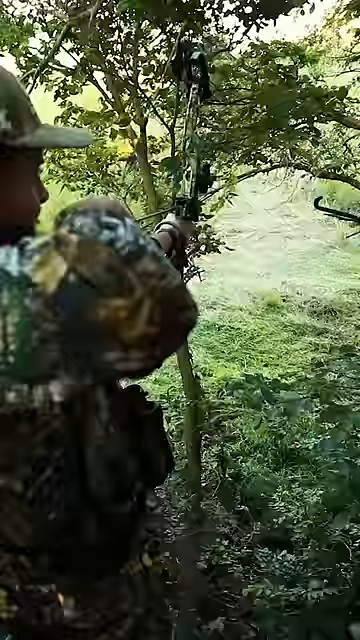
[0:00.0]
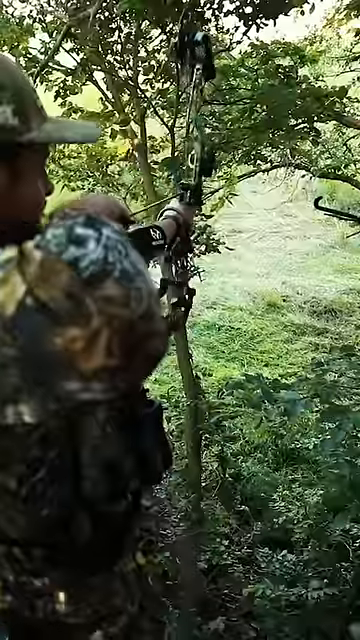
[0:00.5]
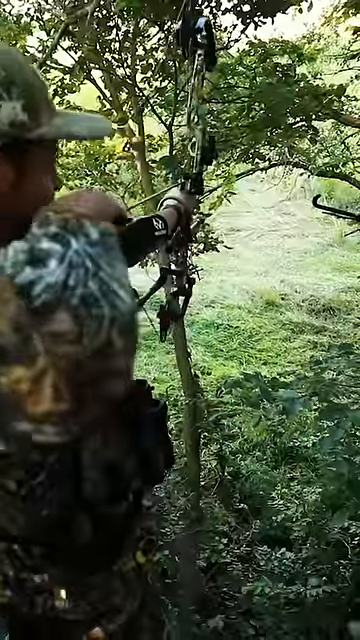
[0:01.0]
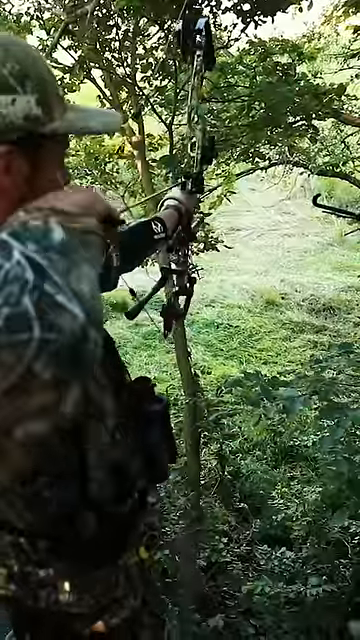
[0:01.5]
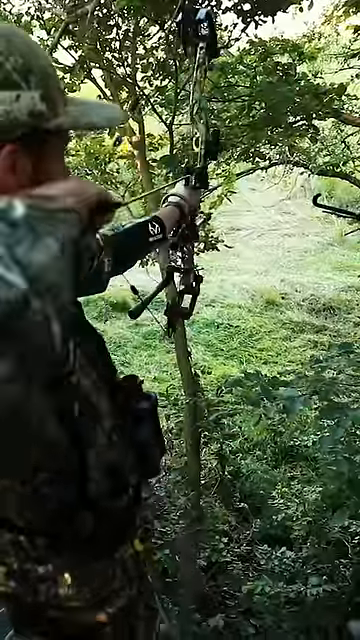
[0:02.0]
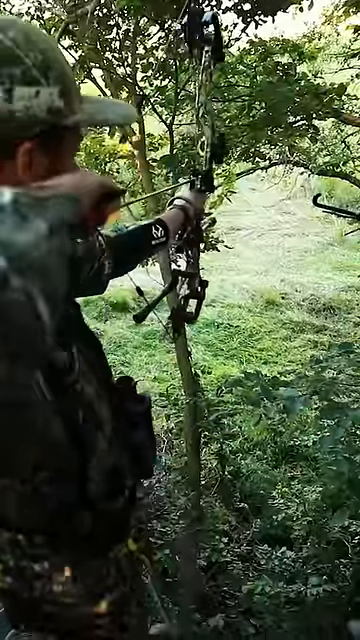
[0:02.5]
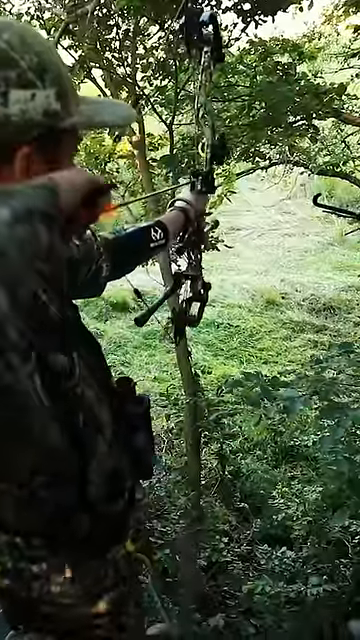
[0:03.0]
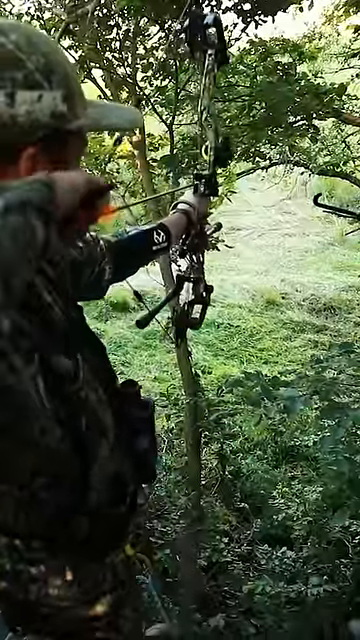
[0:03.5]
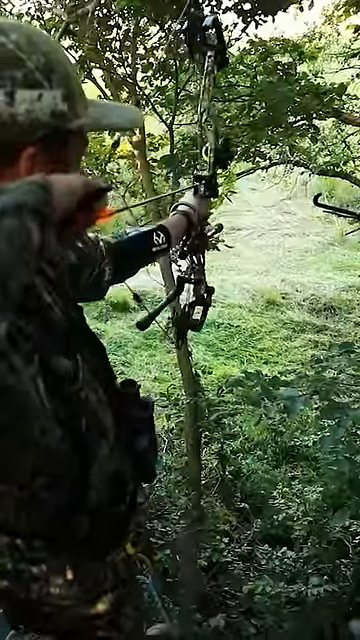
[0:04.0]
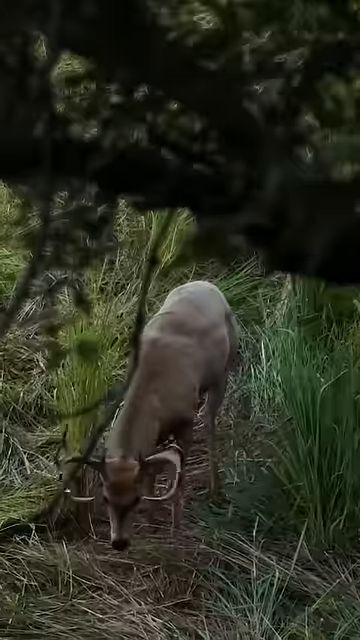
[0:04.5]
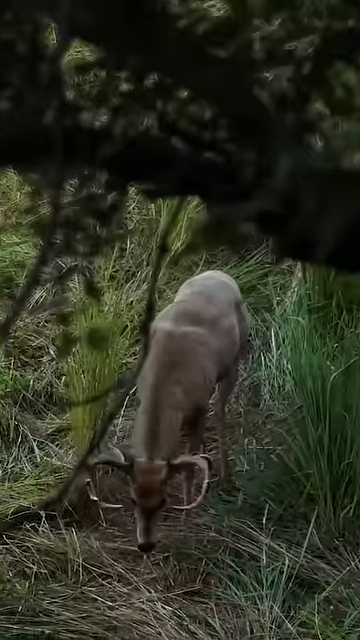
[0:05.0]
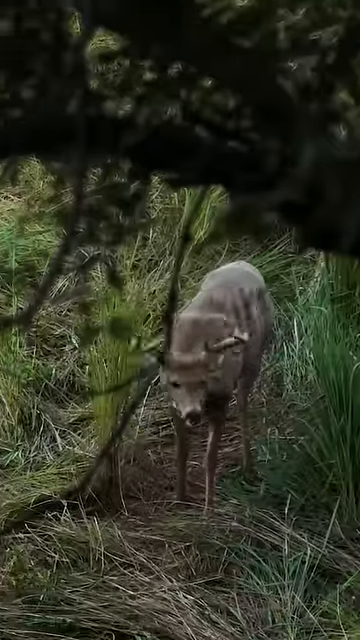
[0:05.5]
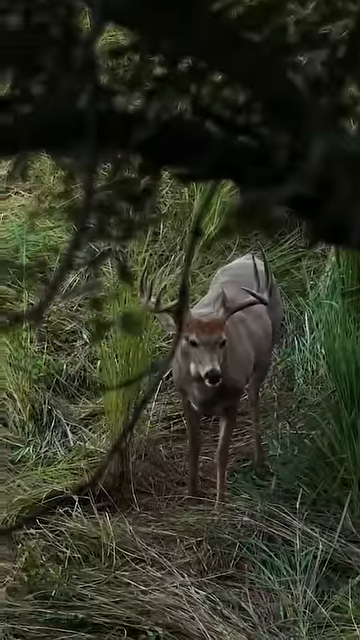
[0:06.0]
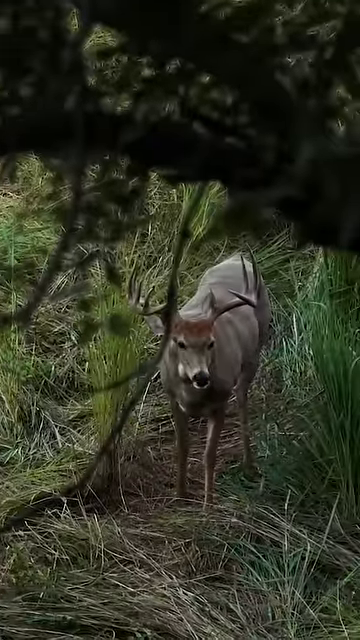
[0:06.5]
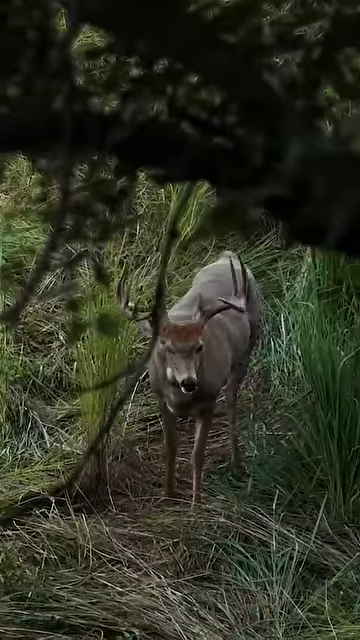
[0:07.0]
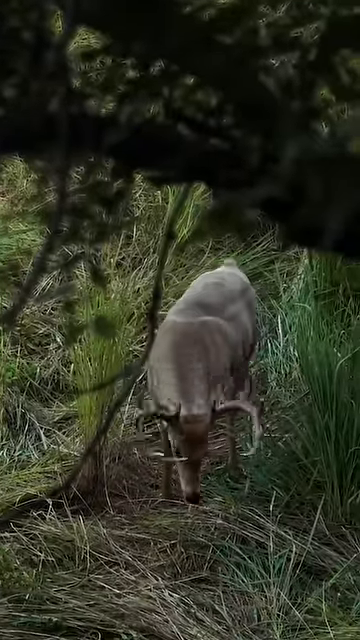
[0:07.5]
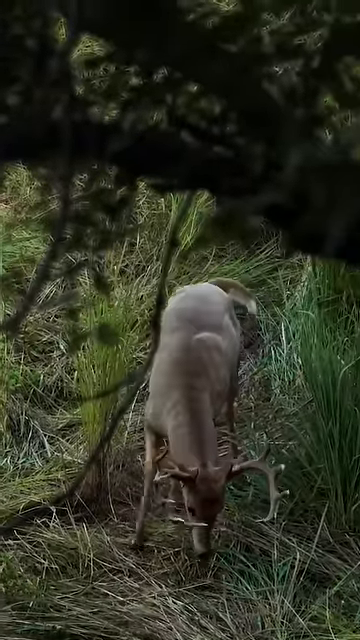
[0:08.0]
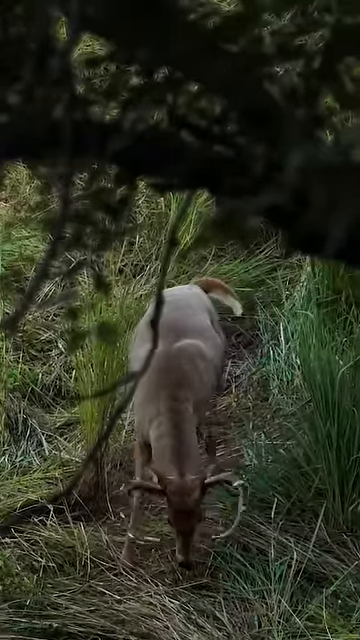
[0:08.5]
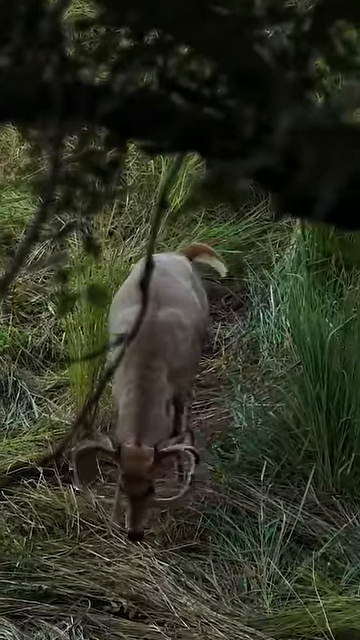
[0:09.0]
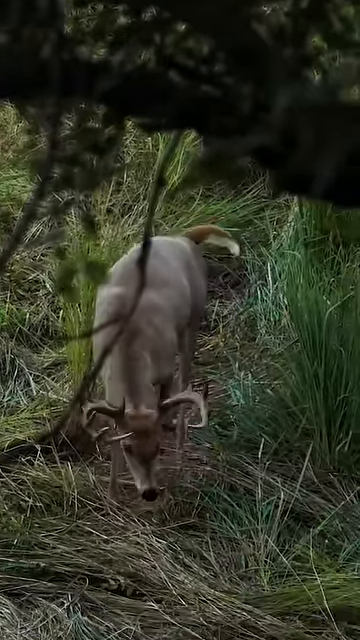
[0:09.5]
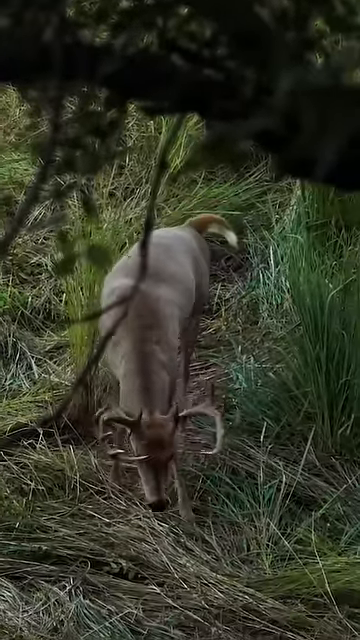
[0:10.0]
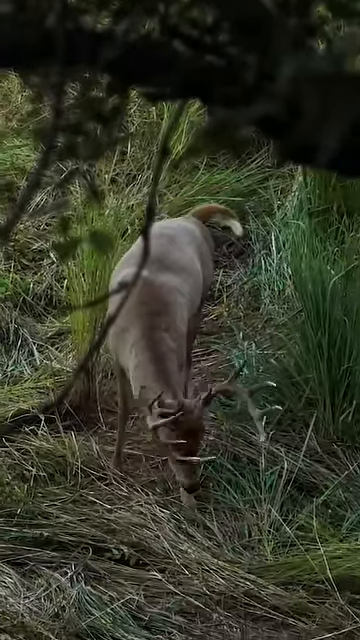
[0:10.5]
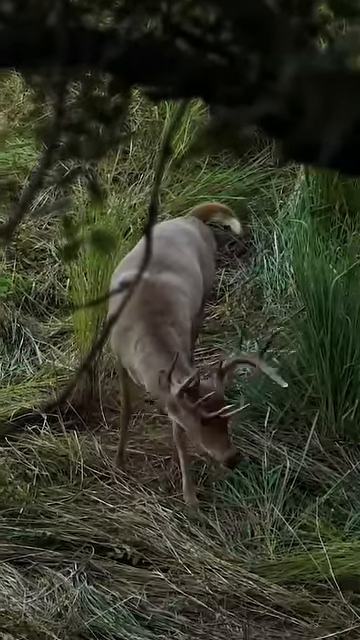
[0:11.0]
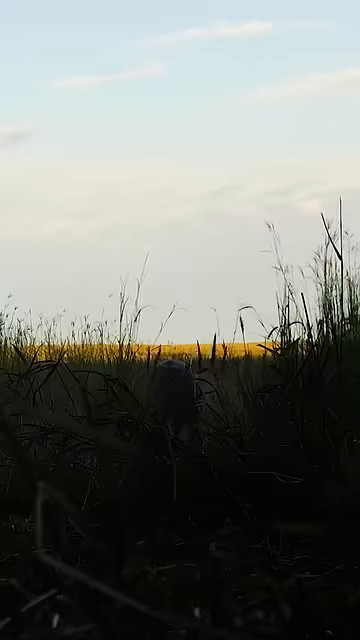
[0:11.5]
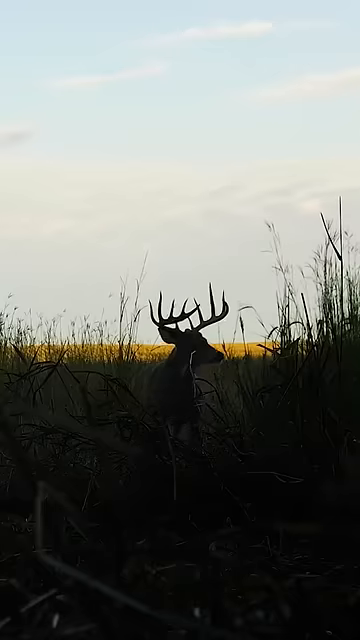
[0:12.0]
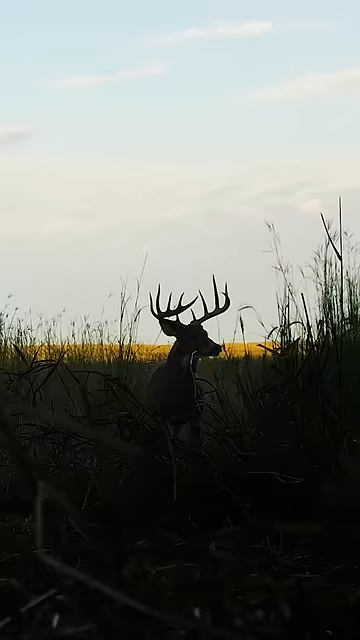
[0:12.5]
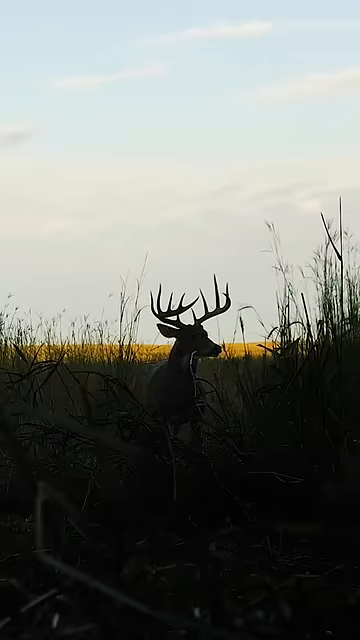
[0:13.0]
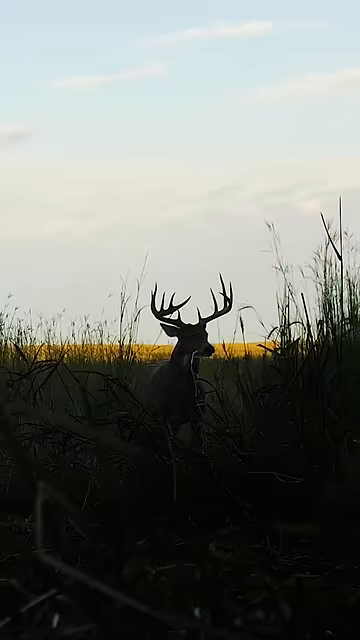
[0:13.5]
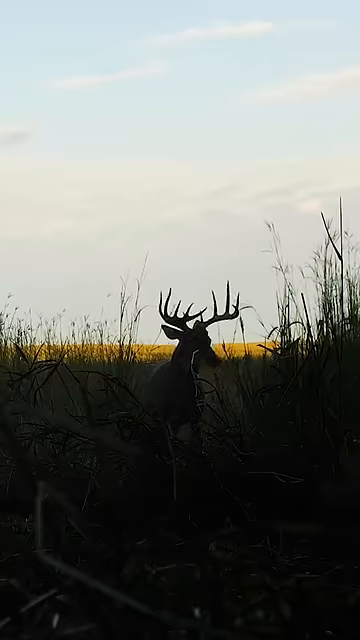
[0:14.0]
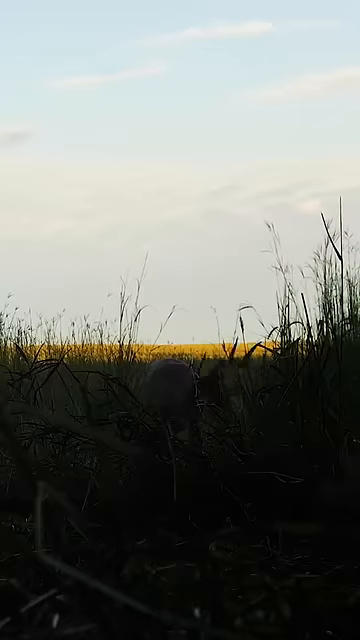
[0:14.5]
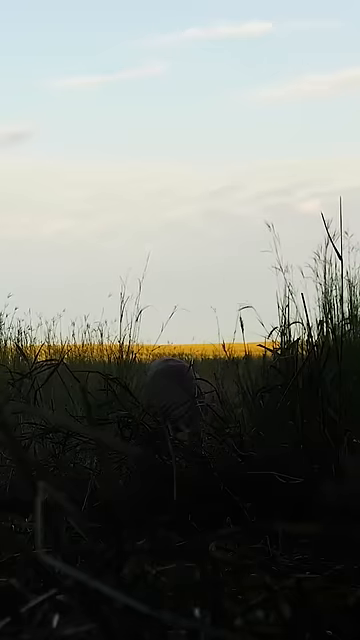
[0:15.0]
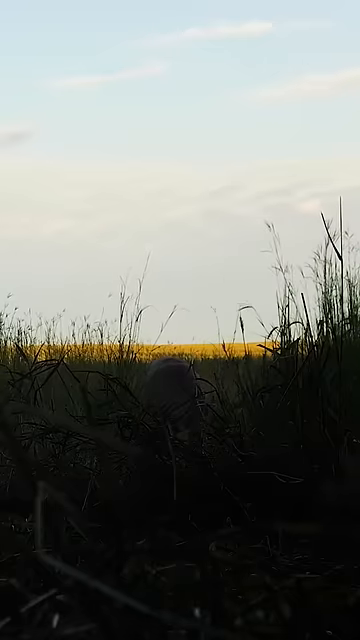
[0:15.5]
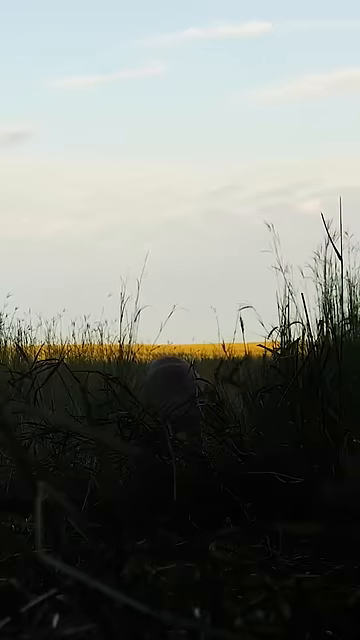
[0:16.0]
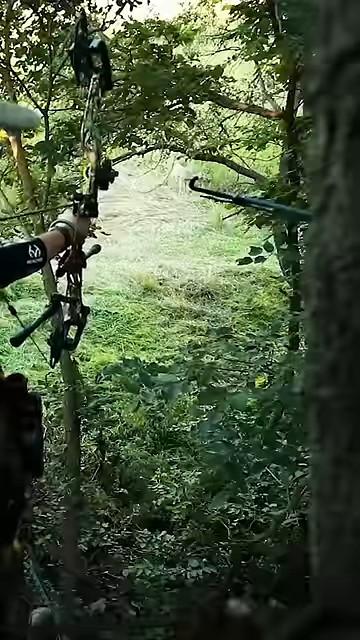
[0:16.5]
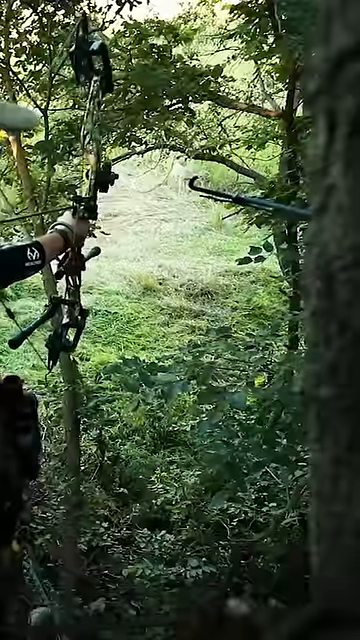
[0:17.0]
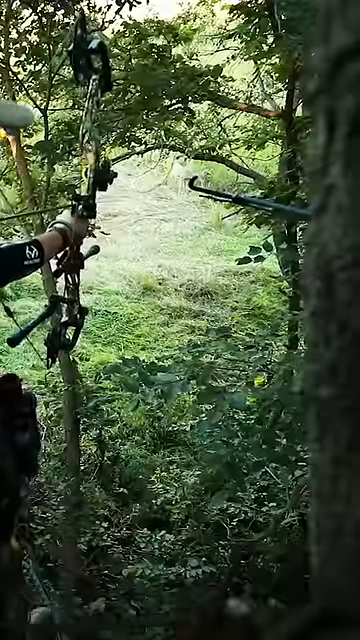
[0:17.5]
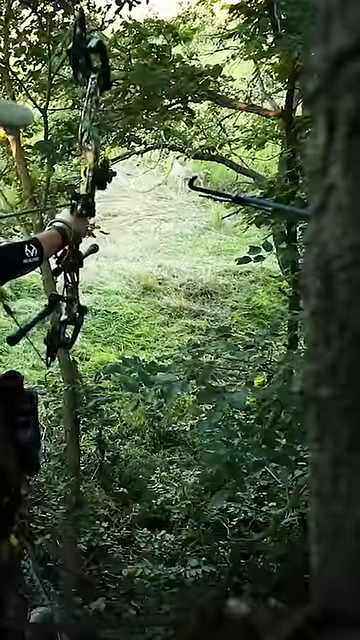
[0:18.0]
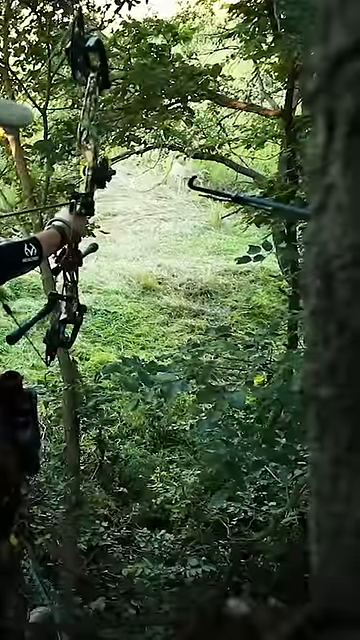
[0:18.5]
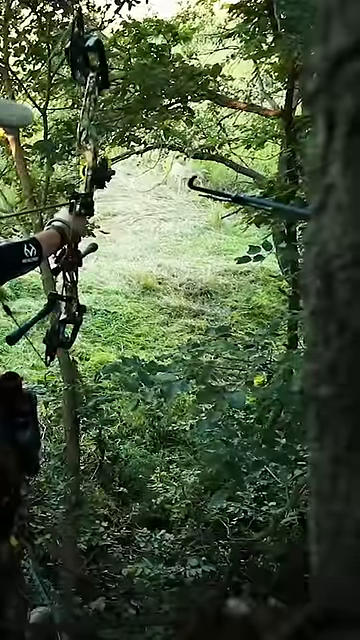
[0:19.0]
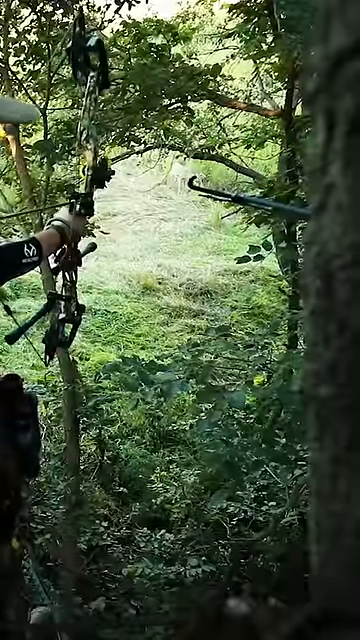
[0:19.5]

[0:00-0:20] A hunter pulls back a bow and arrow and points it toward a deer. The deer is in a wide field of grass whose blades are so tall they are taller than the deer itself, helping hide it. Black stripes run down the left and right sides of the frame, creating a vertical shot that was likely filmed on a phone. A red and white logo in the bottom right corner says "subscribe".